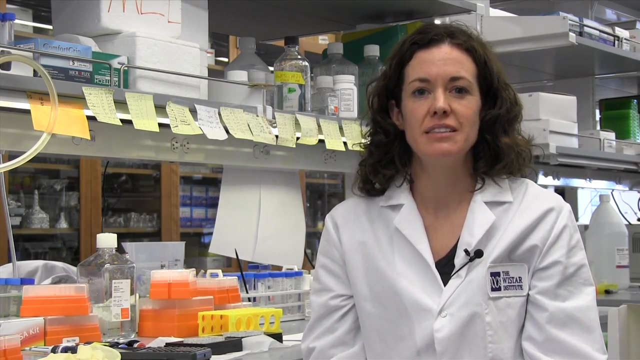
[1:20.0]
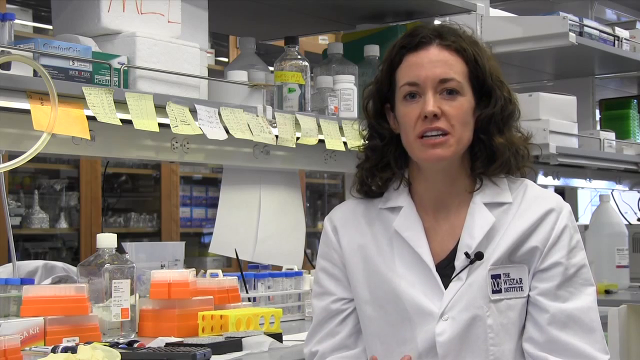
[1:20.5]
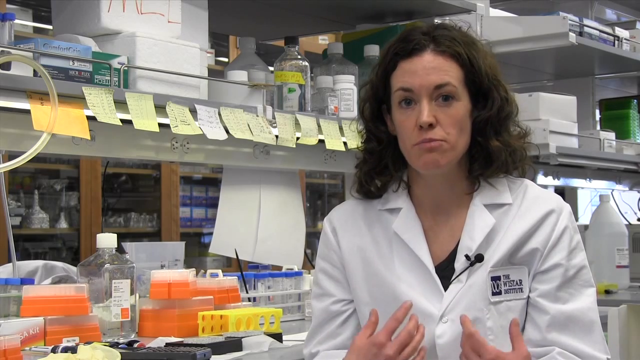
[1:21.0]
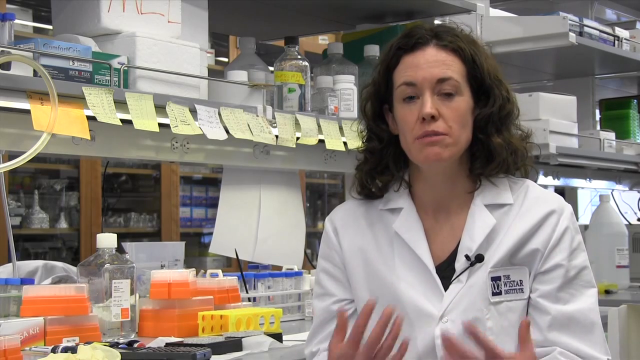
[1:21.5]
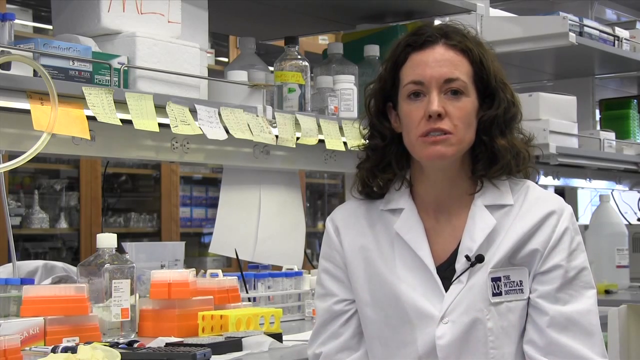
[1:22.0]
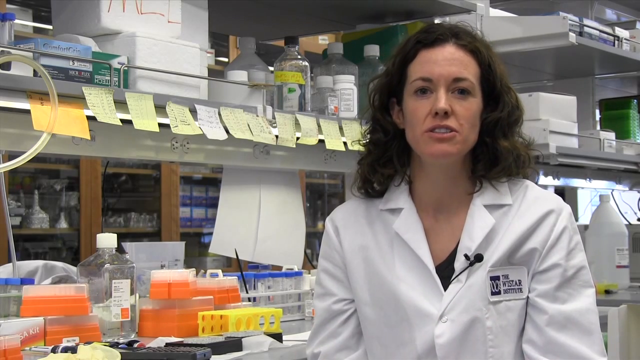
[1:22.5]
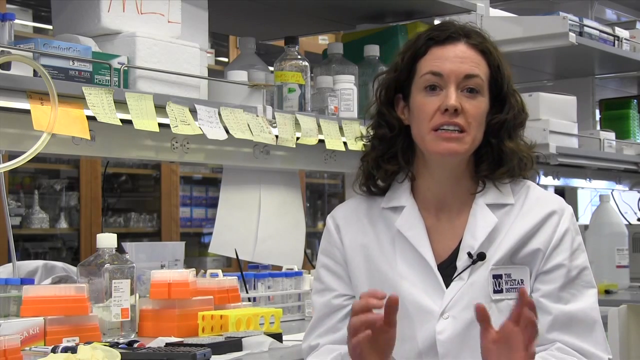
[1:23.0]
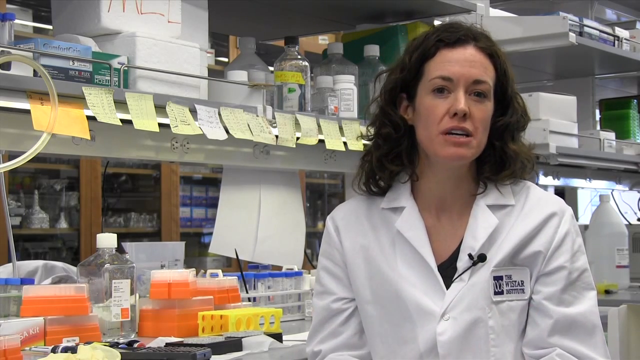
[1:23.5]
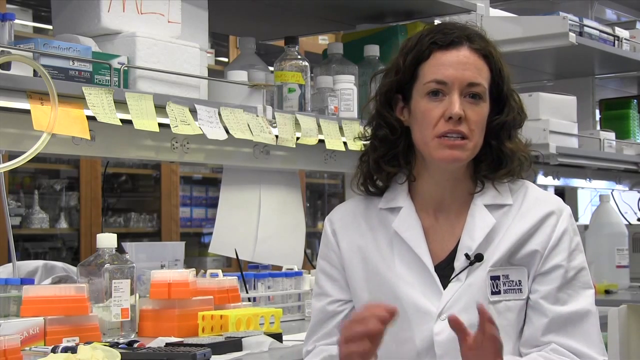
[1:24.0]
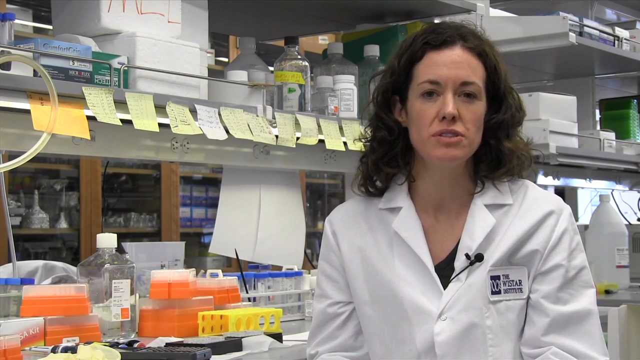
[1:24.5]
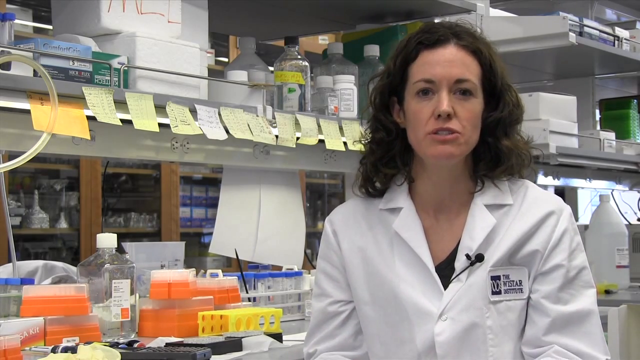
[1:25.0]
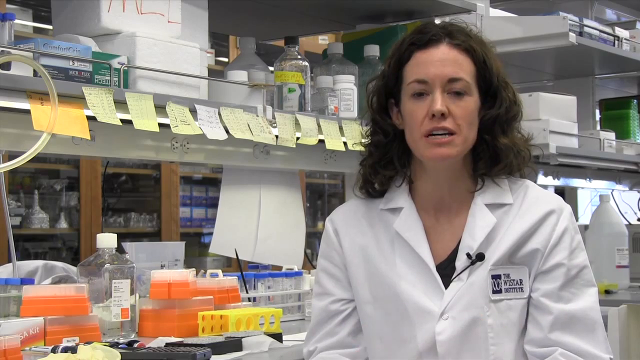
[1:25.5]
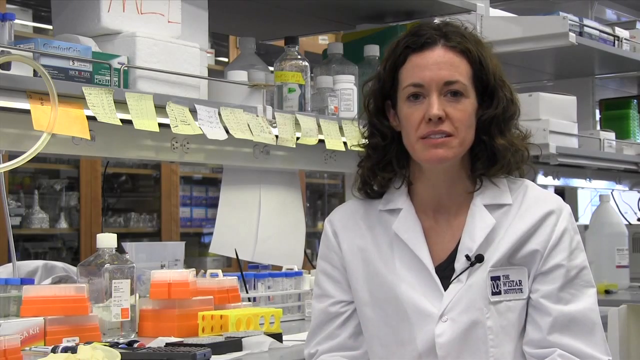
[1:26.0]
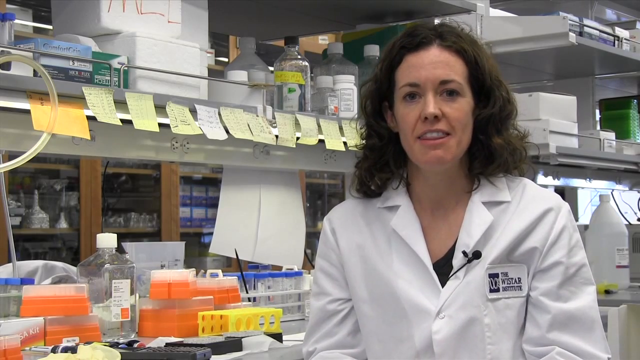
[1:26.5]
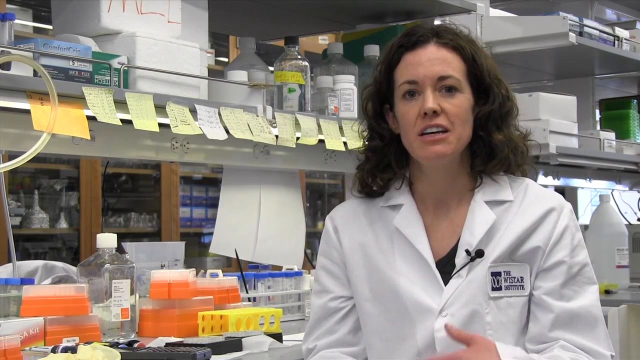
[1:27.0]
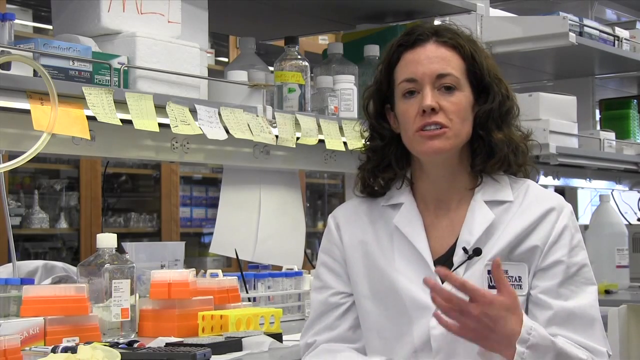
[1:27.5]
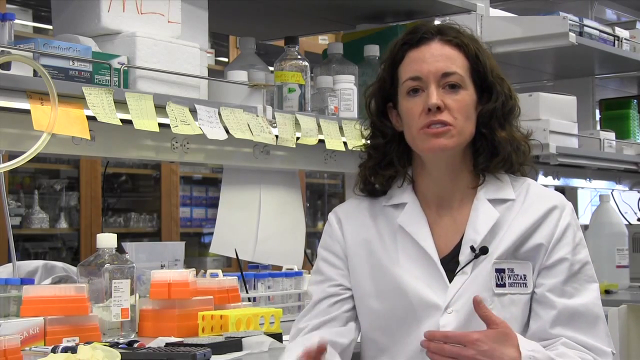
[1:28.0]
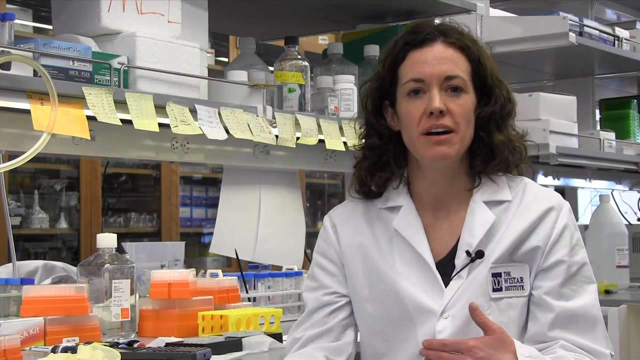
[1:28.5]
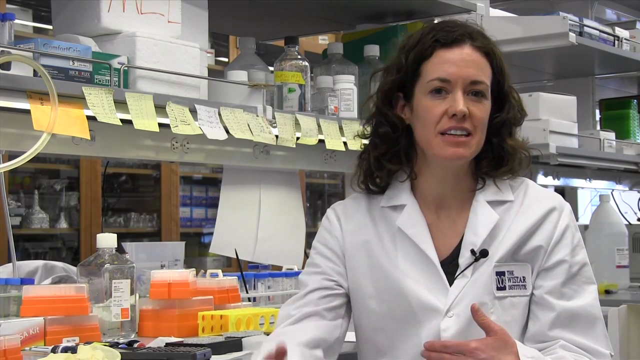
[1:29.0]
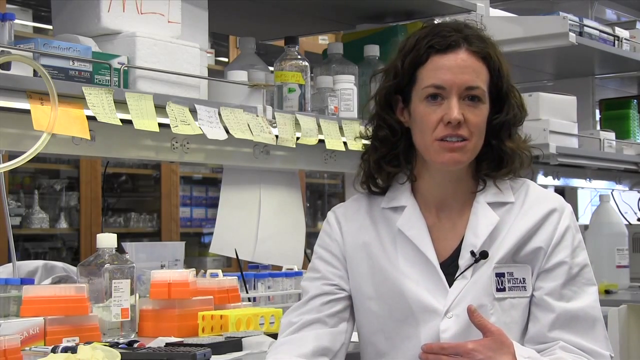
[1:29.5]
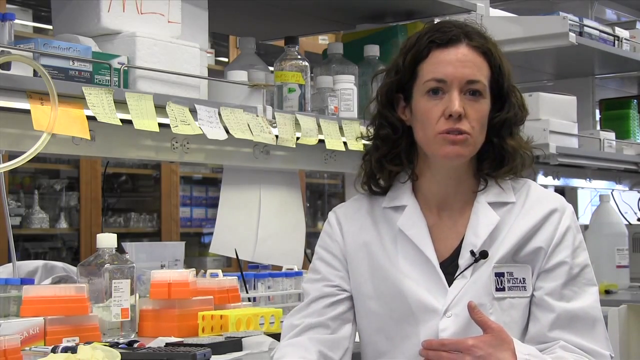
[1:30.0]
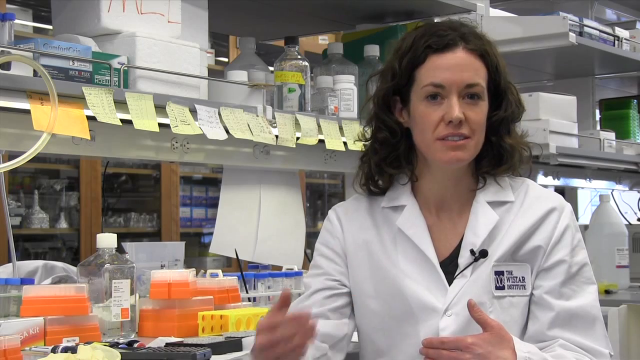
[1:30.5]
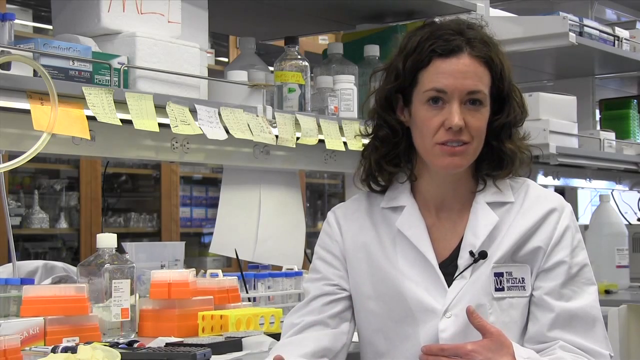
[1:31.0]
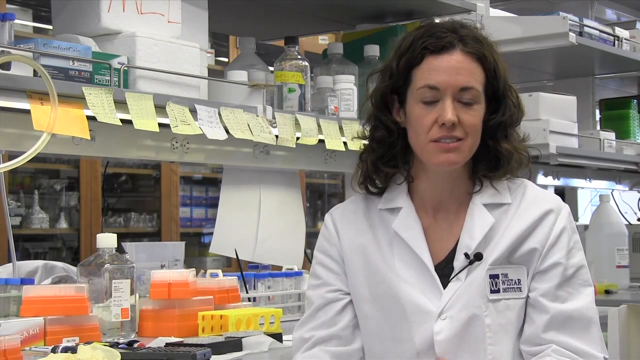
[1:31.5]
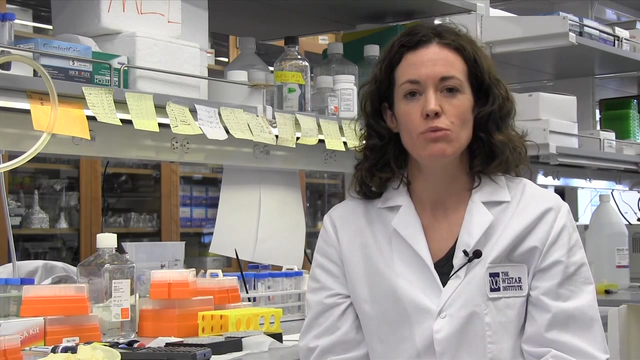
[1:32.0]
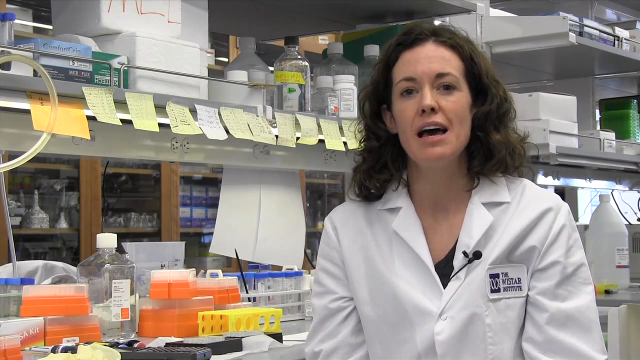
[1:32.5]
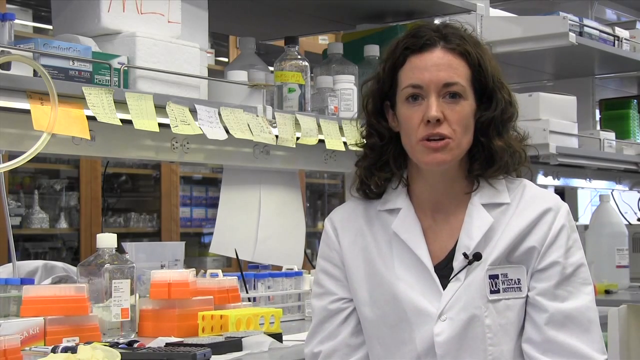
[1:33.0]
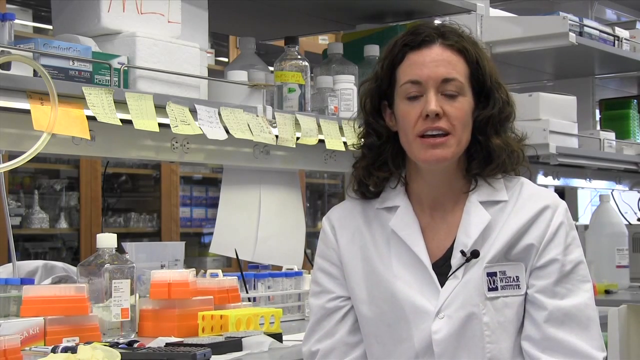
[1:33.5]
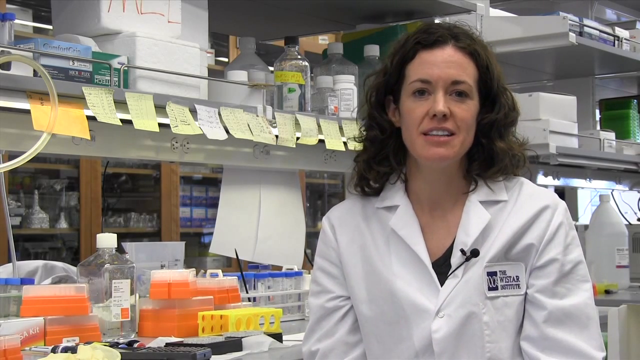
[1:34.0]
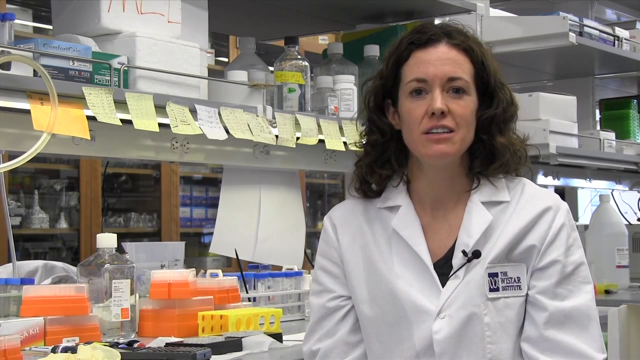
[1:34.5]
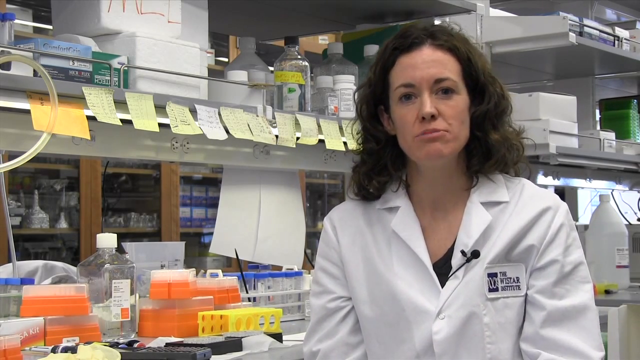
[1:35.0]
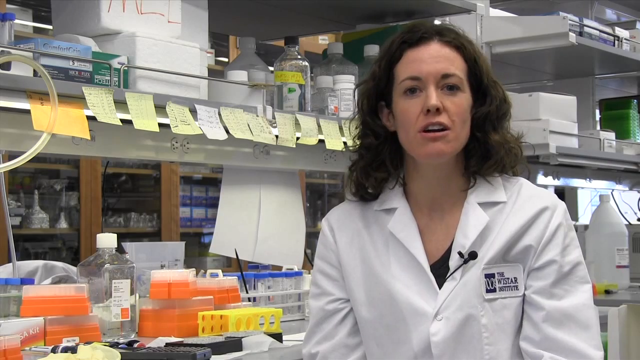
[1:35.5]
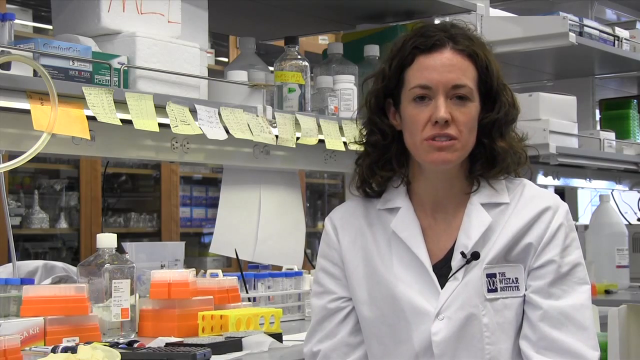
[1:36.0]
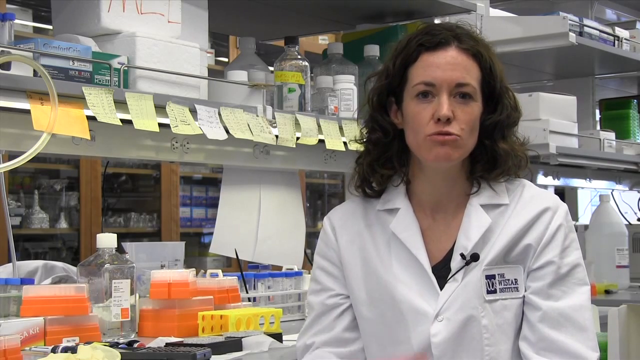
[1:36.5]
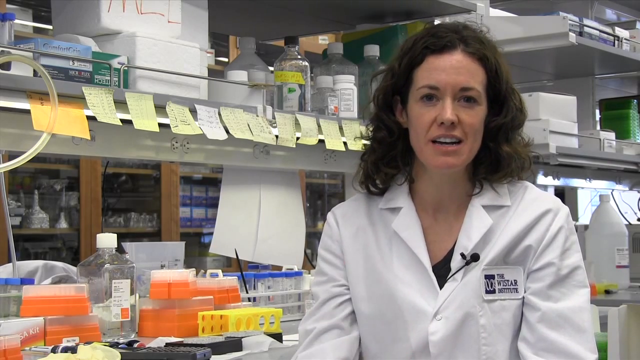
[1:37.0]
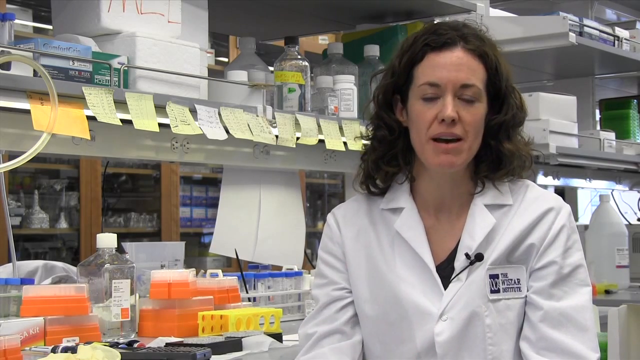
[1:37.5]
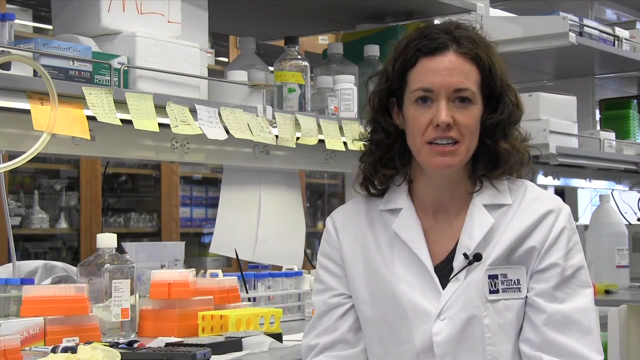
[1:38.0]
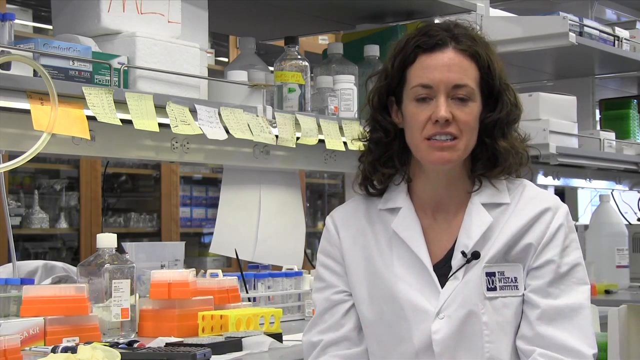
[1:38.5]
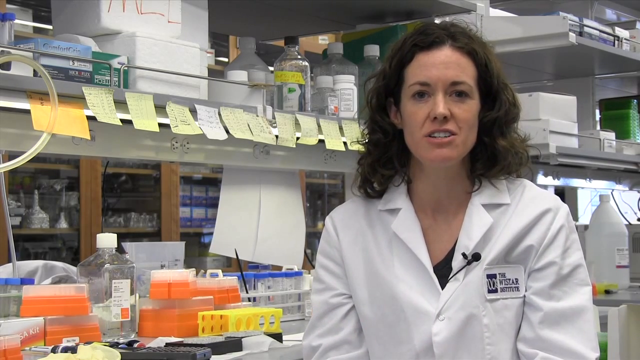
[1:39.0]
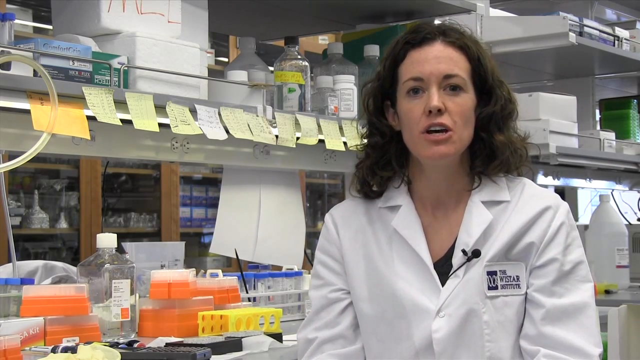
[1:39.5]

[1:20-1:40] The woman keeps talking, but now gestures quite a bit with her hands and arms. At the start, just the tops of her fingers are visible; then she becomes more animated and her hands come up further, fingers splayed and palms facing her. Her palms come up two or three more times and go out of frame, then she makes a forward-moving gesture mostly with her right hand. Her hands stay down for a while, then she gestures again, first with the right hand alone and then with both hands, her hands moving in and out of frame as she talks and she seems to grow more animated. The black shirt peeking out from under her lab coat is a scoop neck or somewhat low neckline, so only a little of it shows.